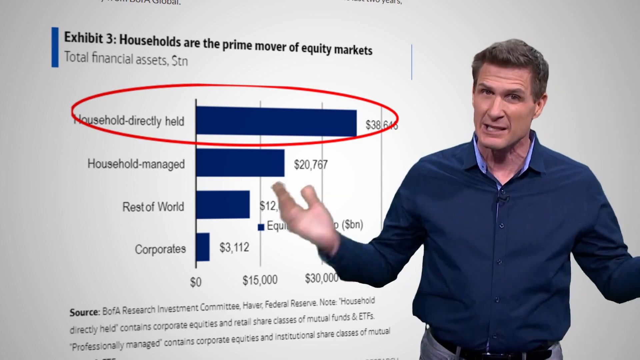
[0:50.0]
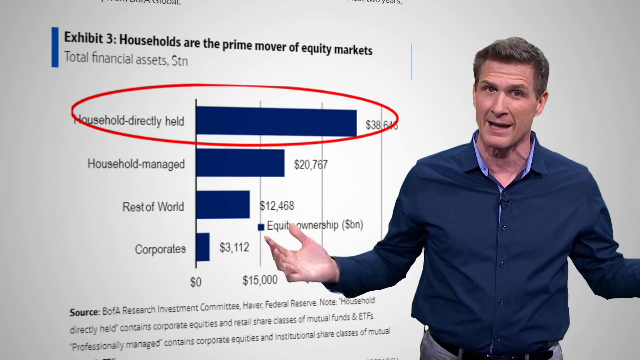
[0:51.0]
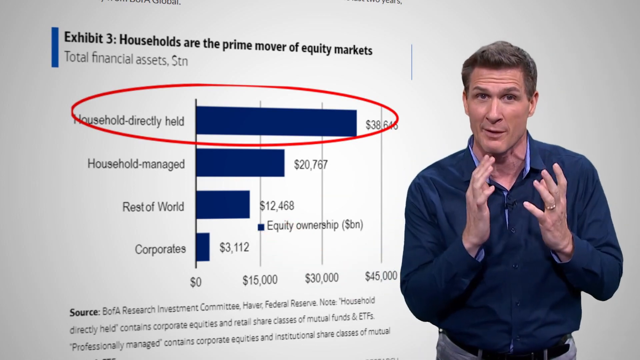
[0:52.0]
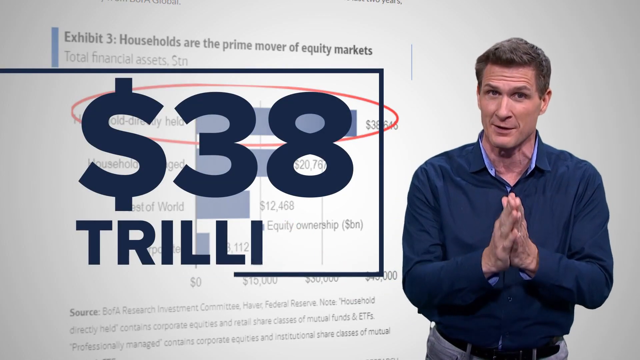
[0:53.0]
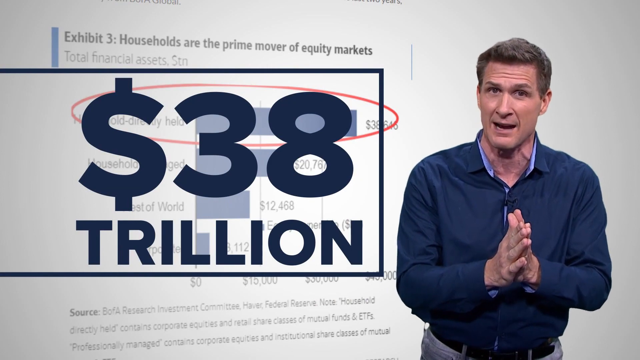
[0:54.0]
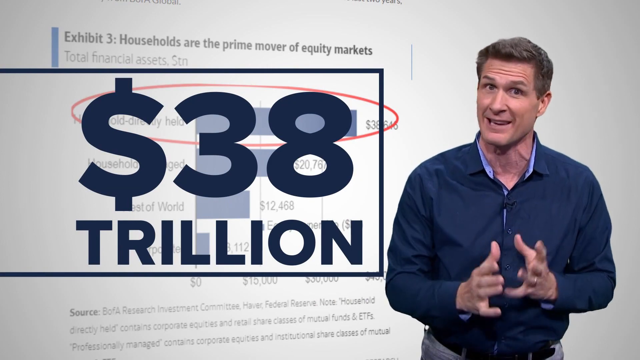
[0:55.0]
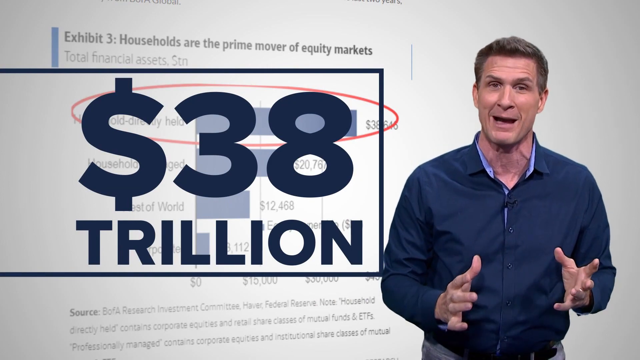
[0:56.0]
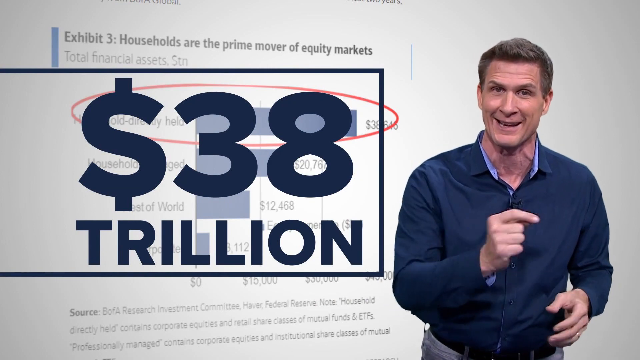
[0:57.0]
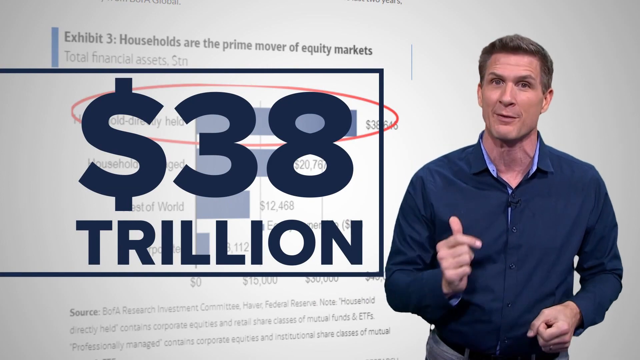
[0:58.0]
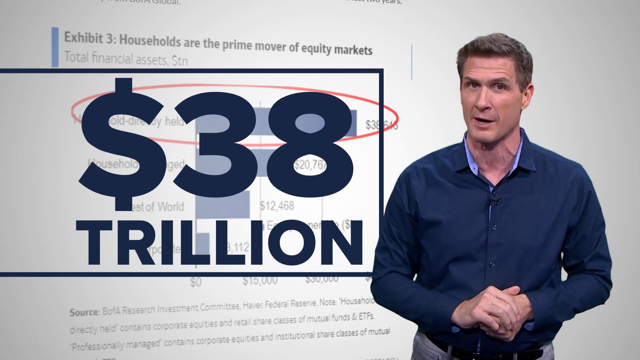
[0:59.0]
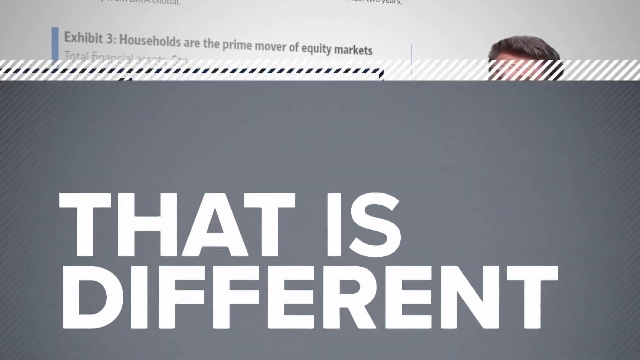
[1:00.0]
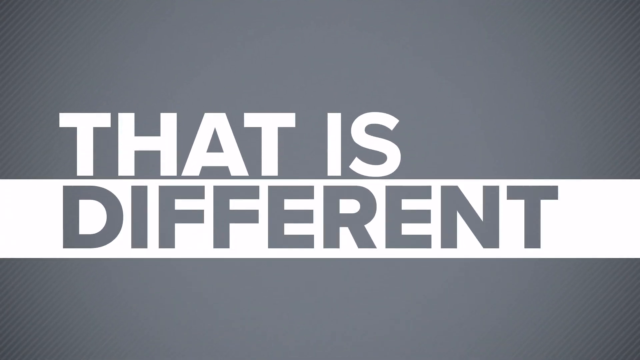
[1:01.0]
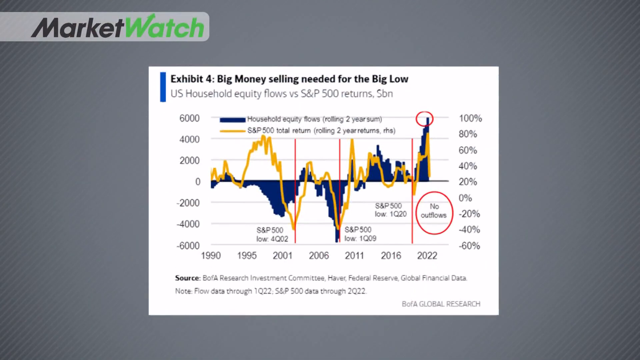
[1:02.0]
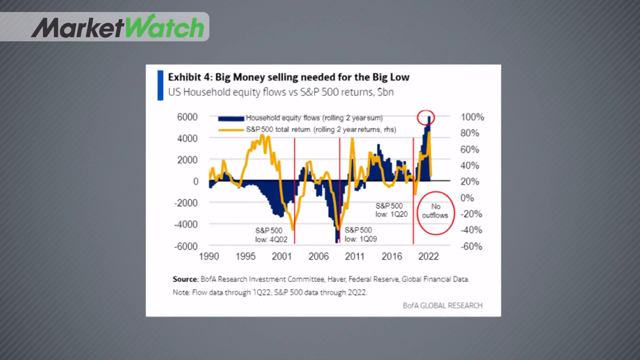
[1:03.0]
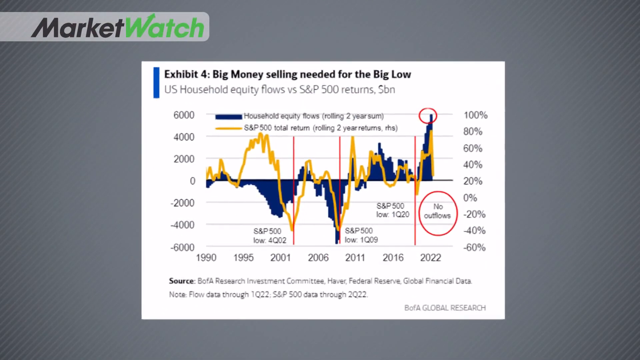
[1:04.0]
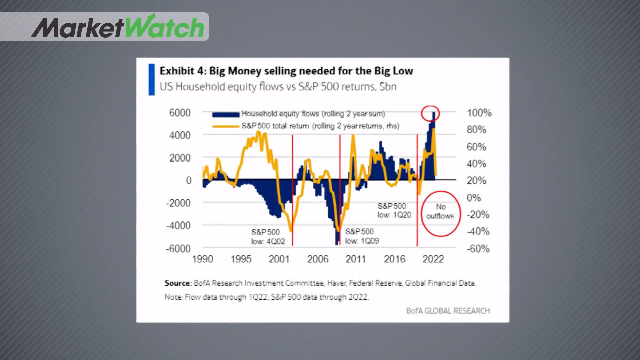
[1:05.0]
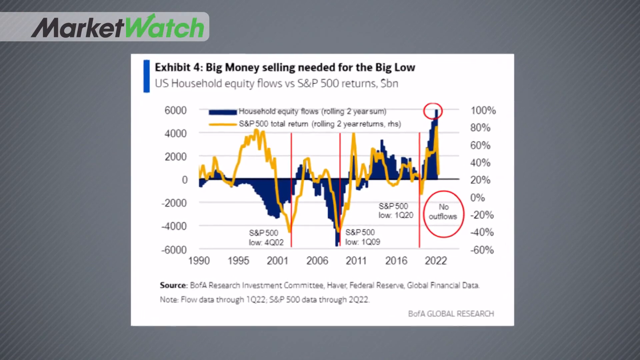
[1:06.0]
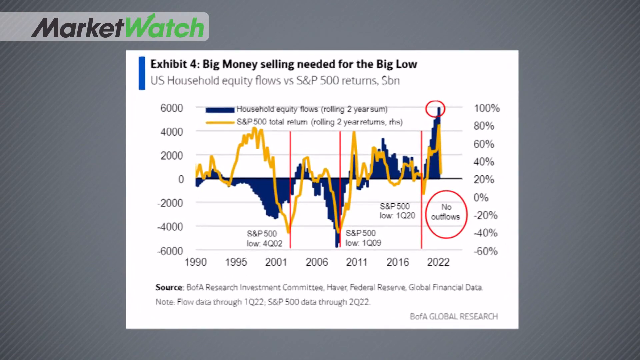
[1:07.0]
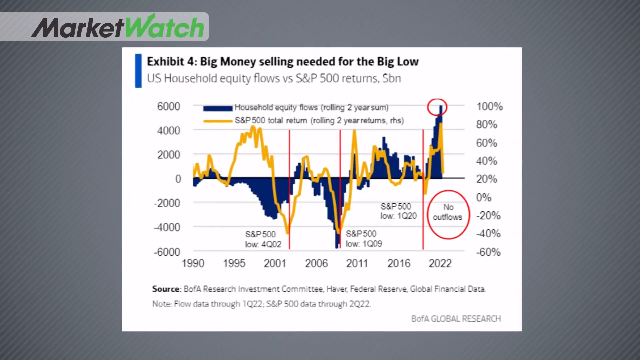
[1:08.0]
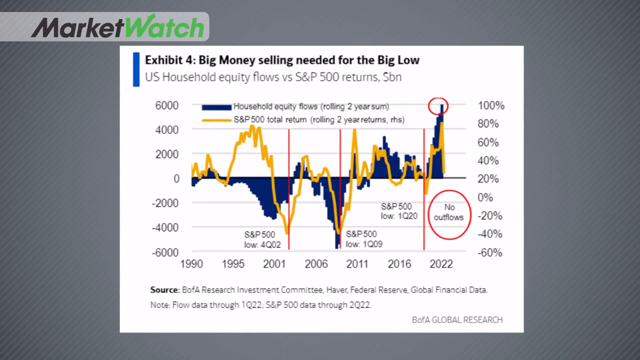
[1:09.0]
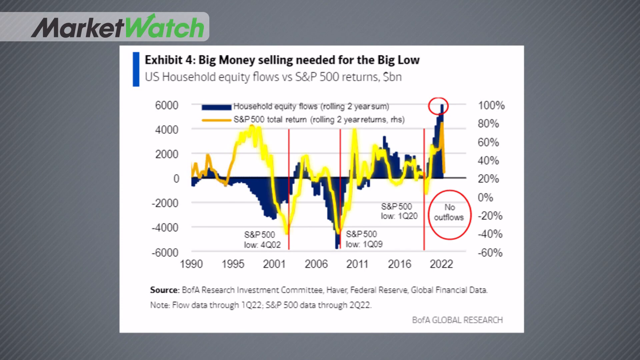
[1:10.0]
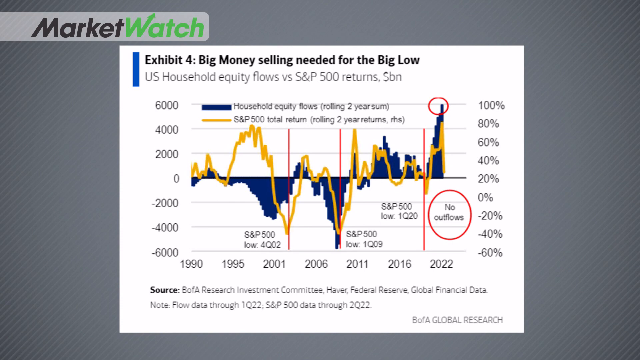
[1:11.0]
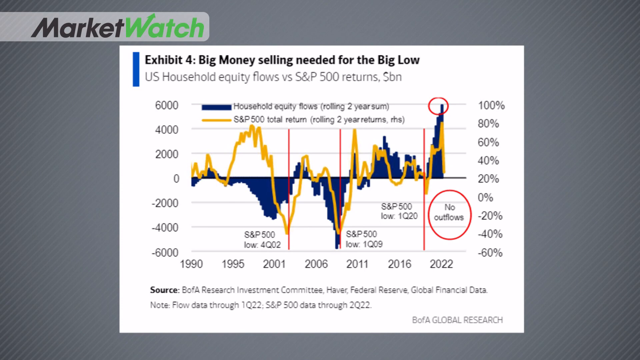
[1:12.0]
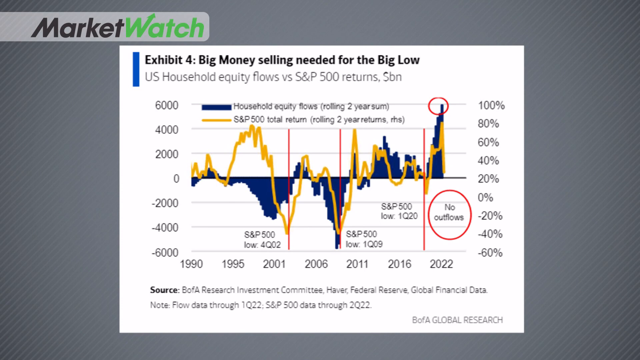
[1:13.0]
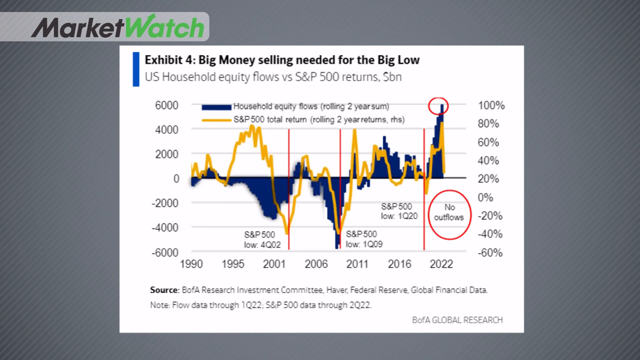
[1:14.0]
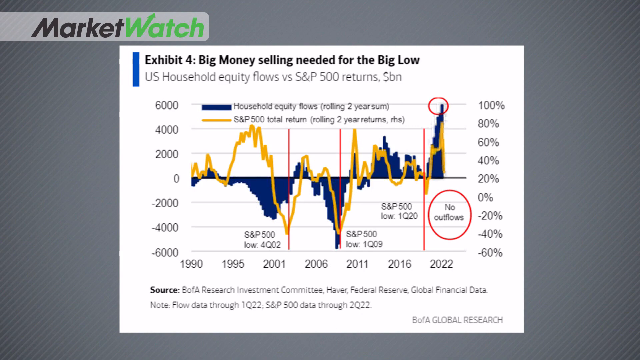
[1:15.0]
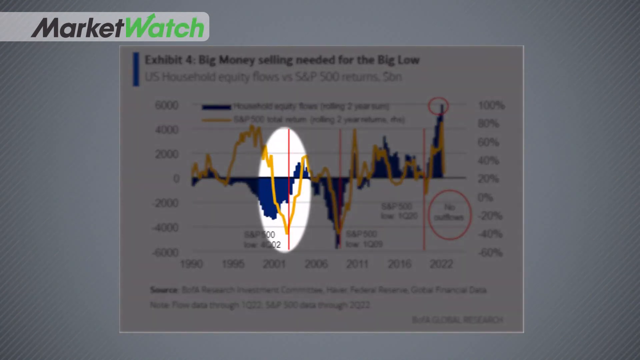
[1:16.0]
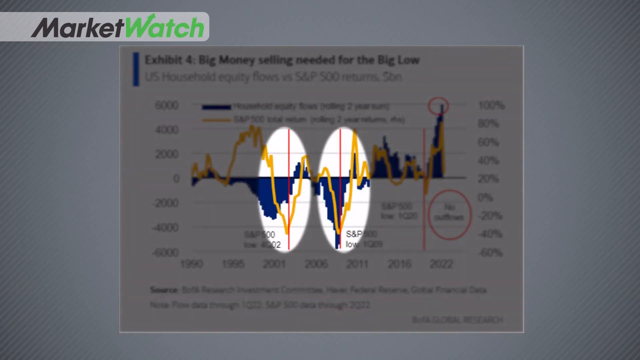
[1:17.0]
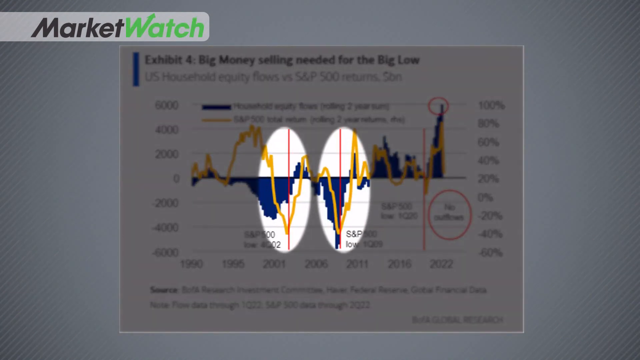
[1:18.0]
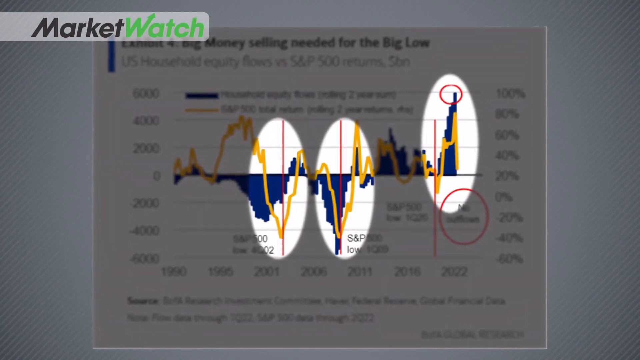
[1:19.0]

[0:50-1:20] The host in the blue jacket appears with his hands together, and next to him is a large graphic reading "38 trillion" in bold font. He shakes his head and waves his hands around, very animated. Another graphic pops up over the screen and the man disappears as it takes up the whole screen, reading "that is different" in gray and white. A chart then pops up; on top, written in black, it says "exhibit for big money selling needed for the big low", and below that "U.S. household equity flows vs. S&P 500 returns". The chart has yellow and blue lines kind of forming peaks and valleys, and along the bottom it runs from 1990 to 2022.